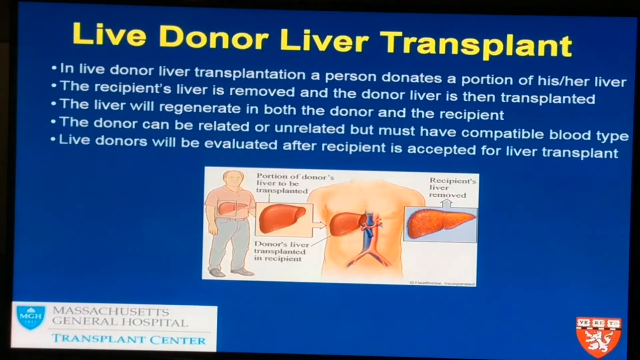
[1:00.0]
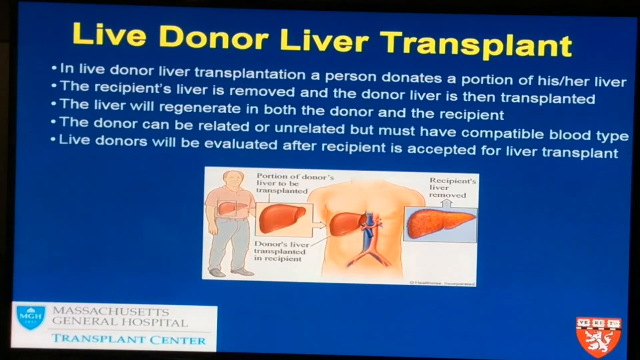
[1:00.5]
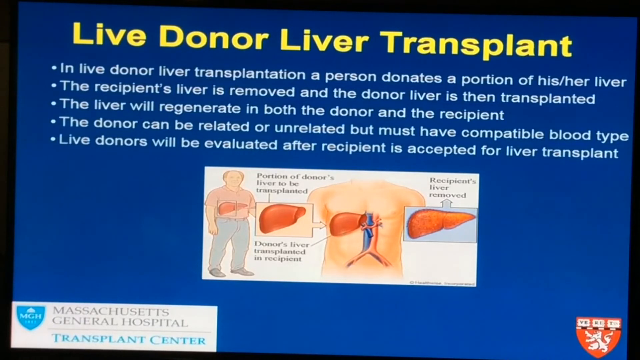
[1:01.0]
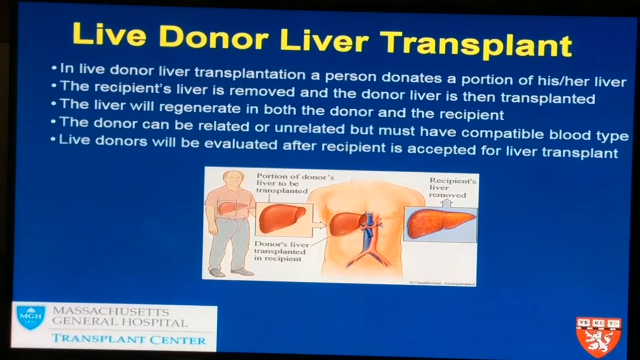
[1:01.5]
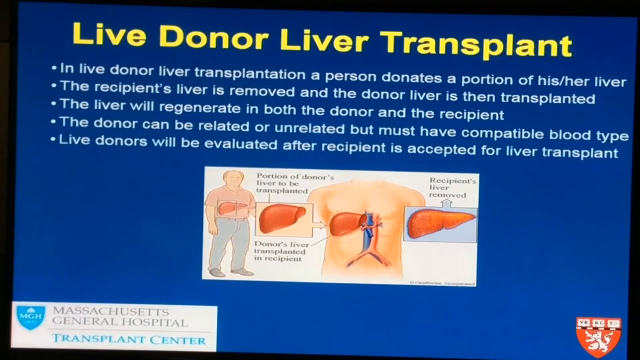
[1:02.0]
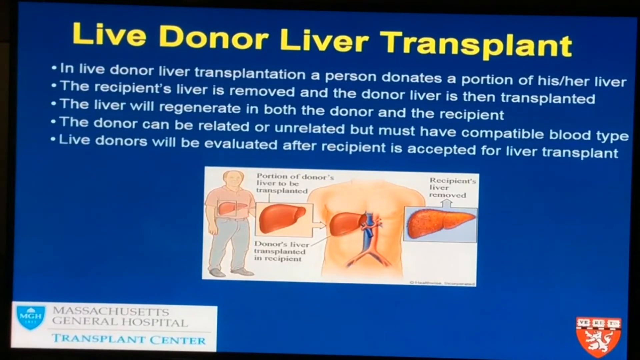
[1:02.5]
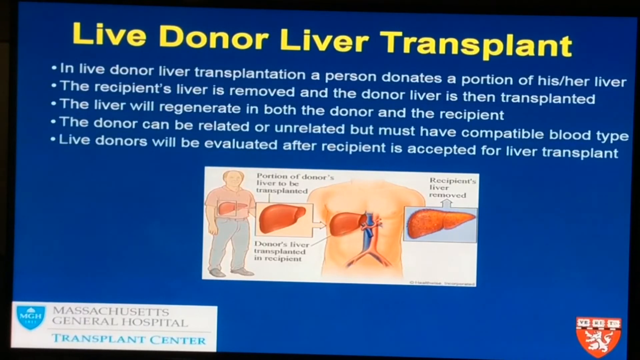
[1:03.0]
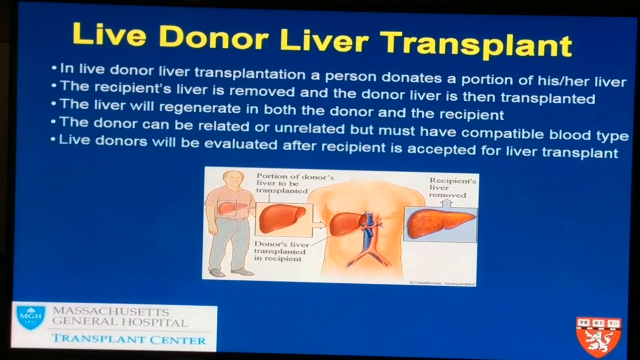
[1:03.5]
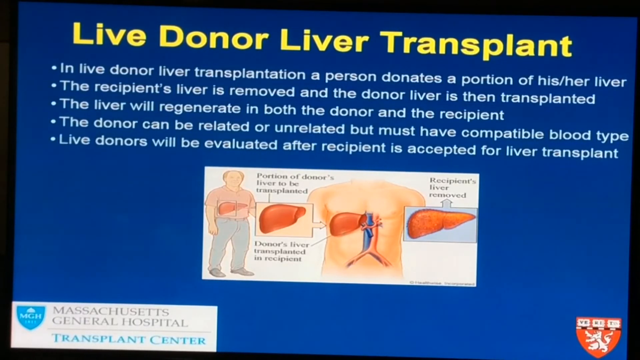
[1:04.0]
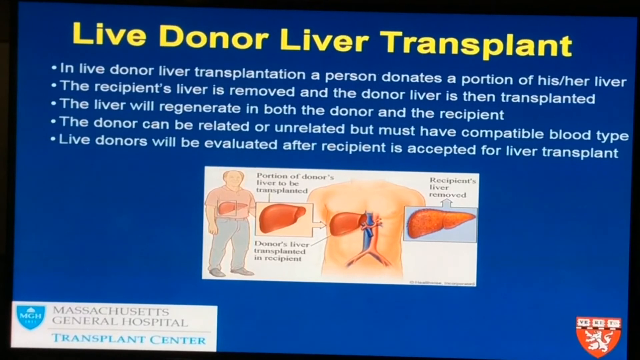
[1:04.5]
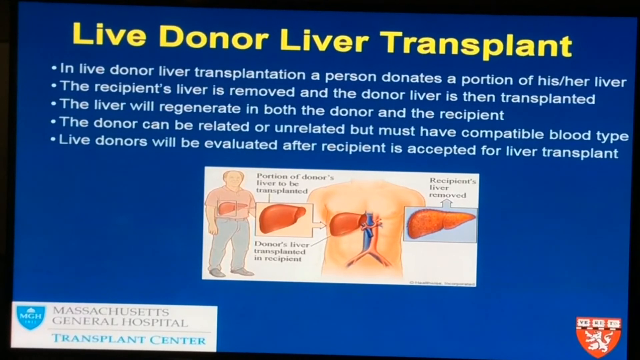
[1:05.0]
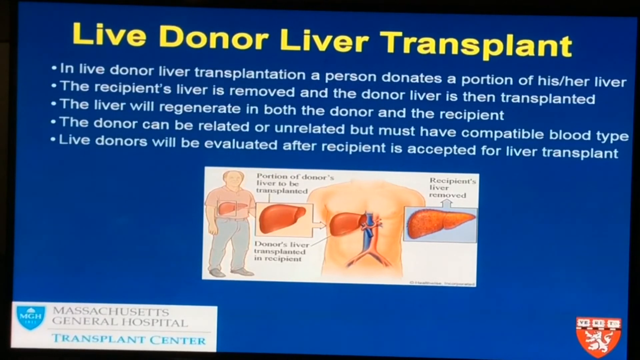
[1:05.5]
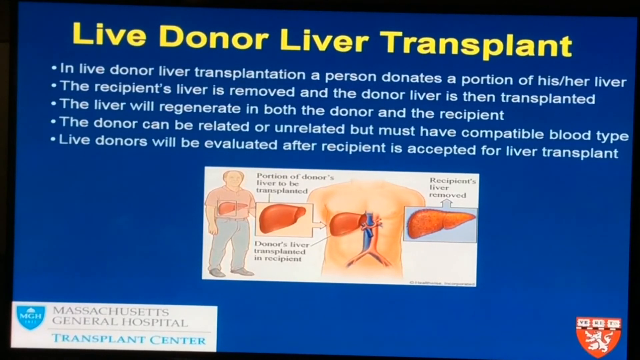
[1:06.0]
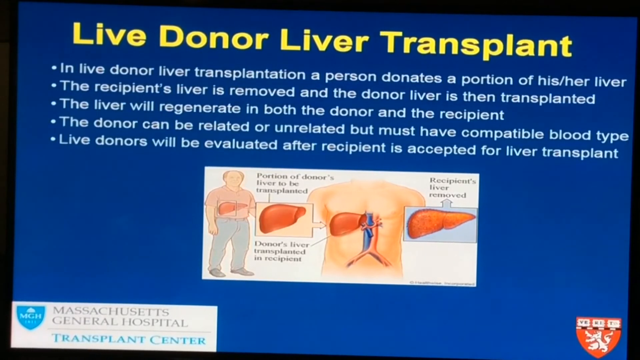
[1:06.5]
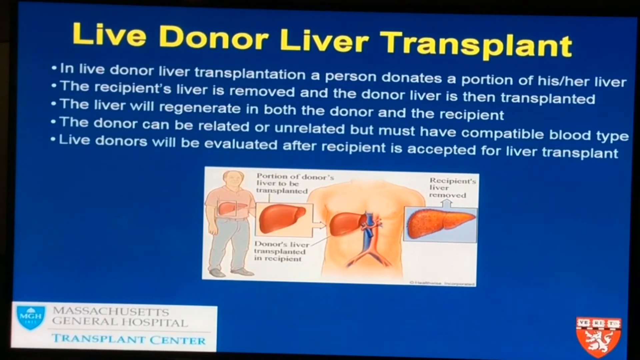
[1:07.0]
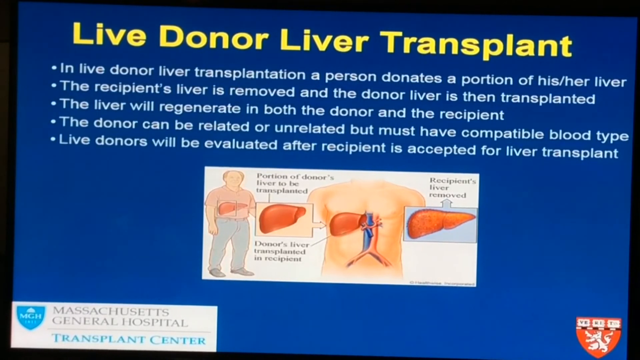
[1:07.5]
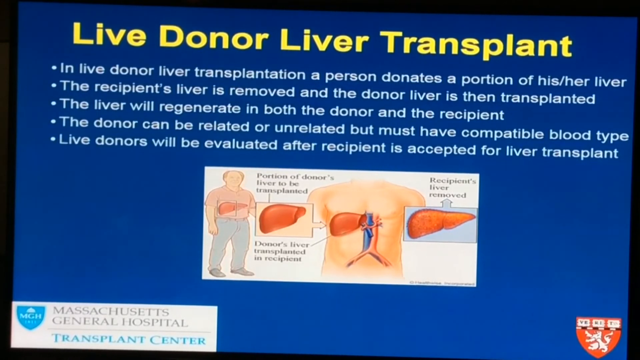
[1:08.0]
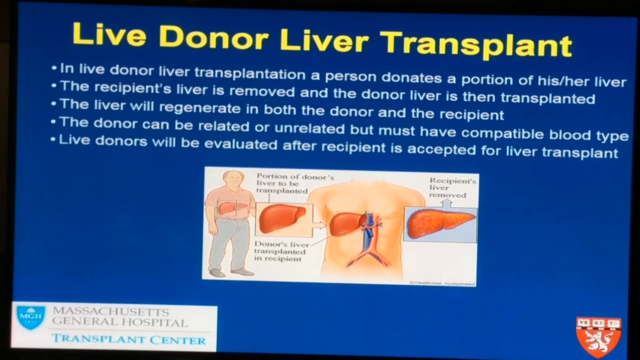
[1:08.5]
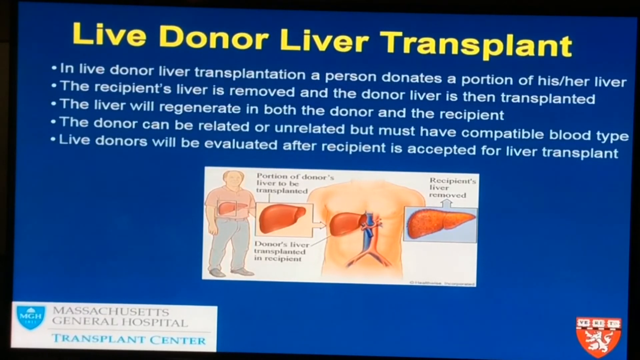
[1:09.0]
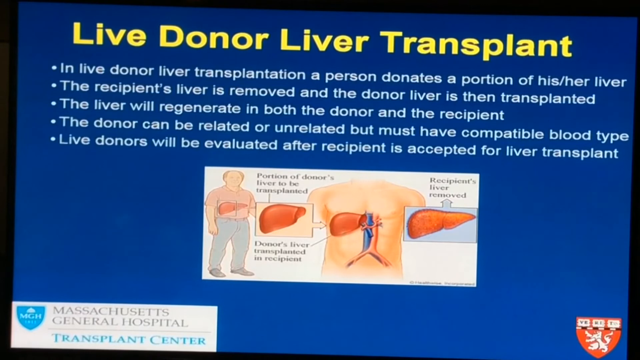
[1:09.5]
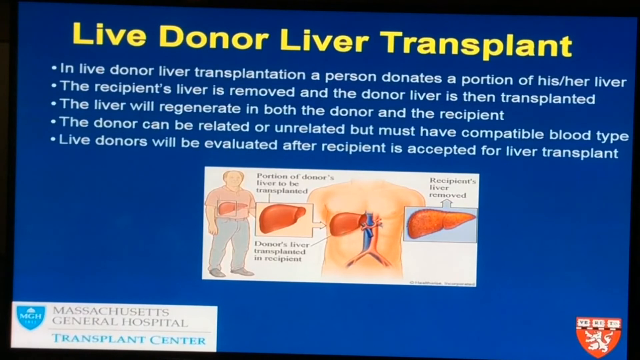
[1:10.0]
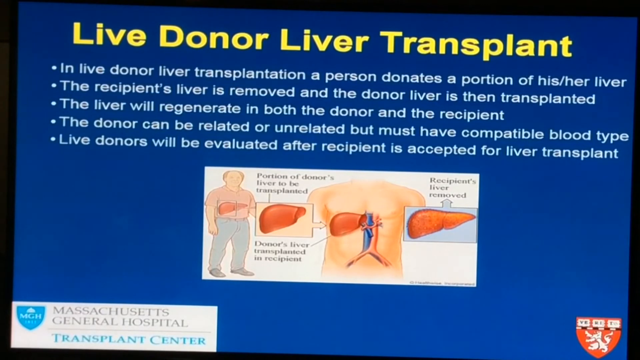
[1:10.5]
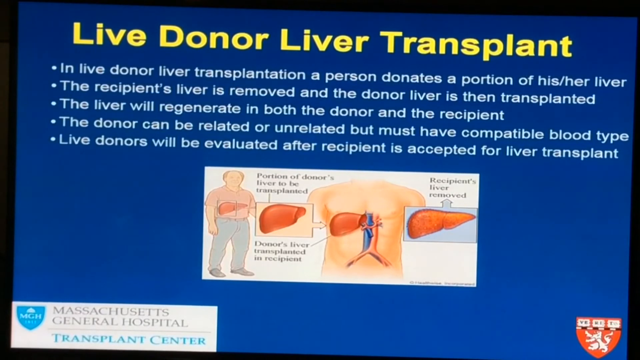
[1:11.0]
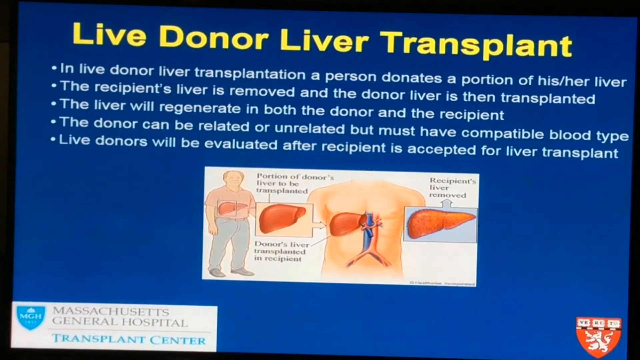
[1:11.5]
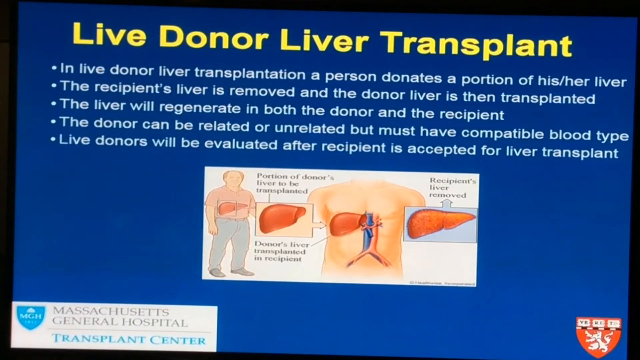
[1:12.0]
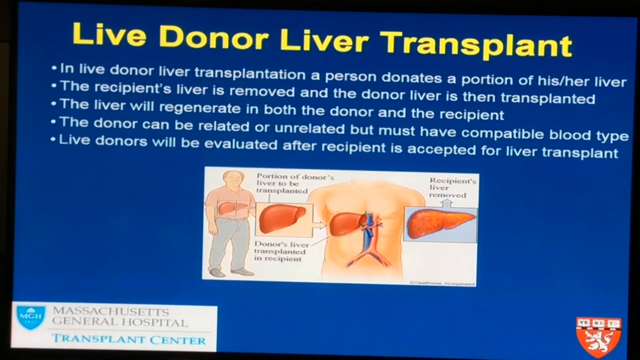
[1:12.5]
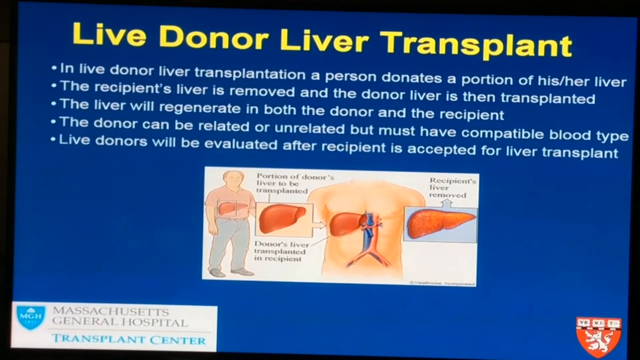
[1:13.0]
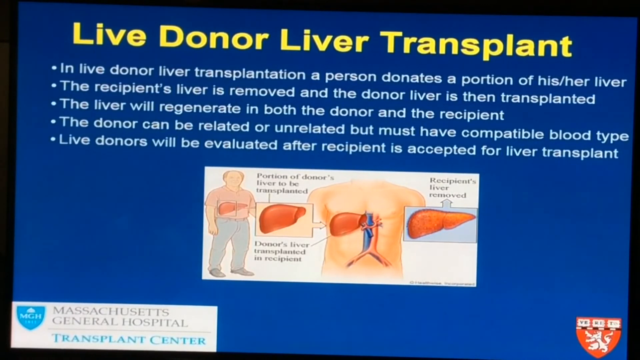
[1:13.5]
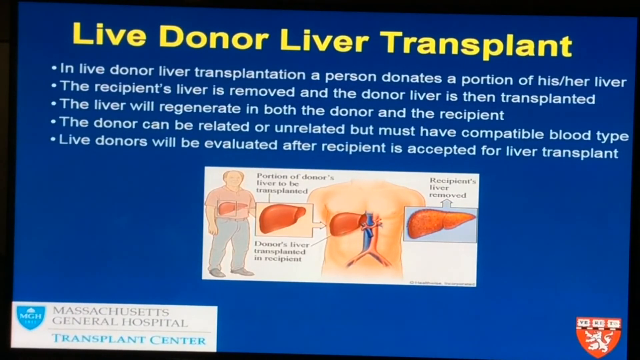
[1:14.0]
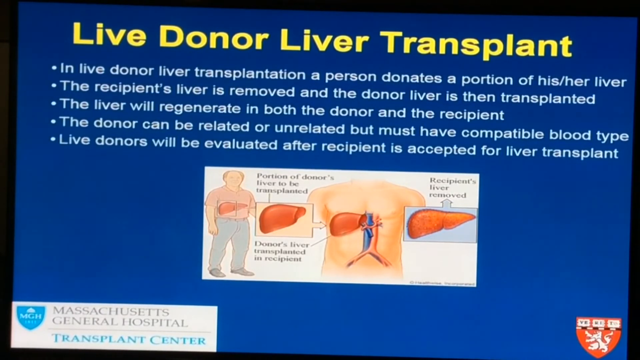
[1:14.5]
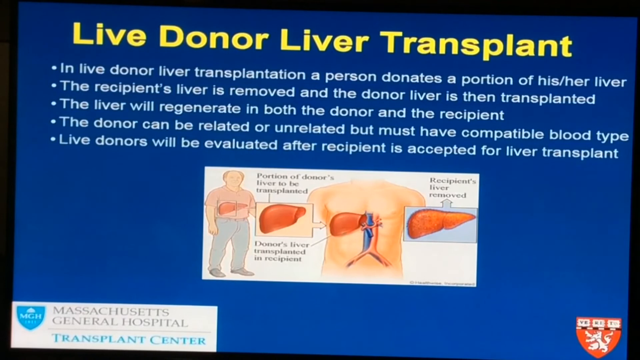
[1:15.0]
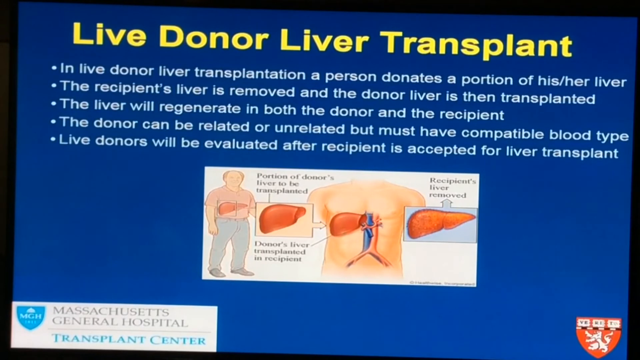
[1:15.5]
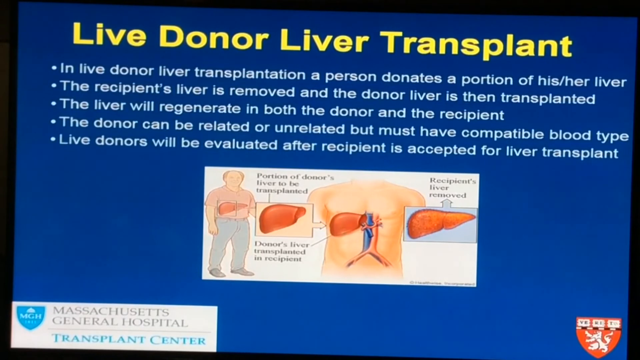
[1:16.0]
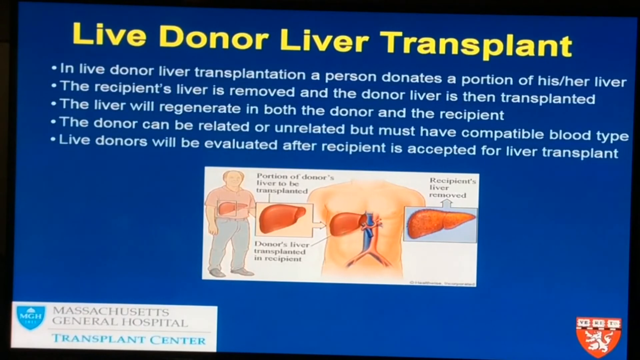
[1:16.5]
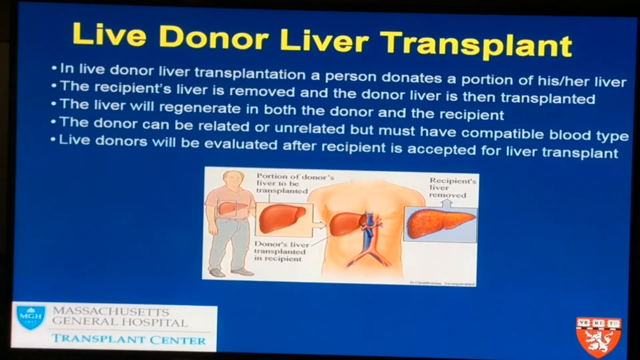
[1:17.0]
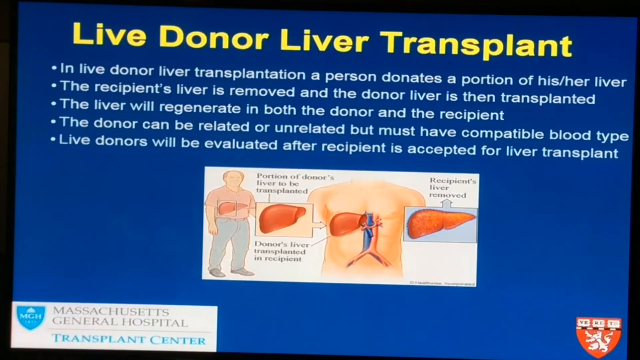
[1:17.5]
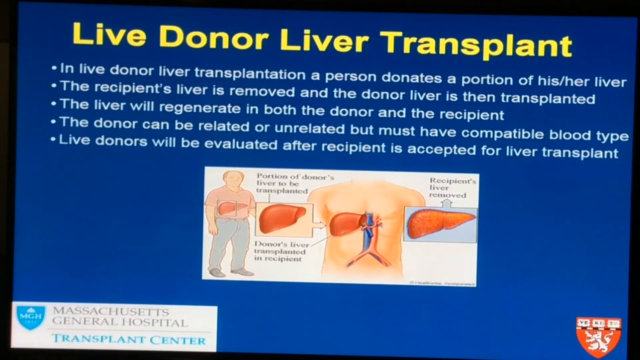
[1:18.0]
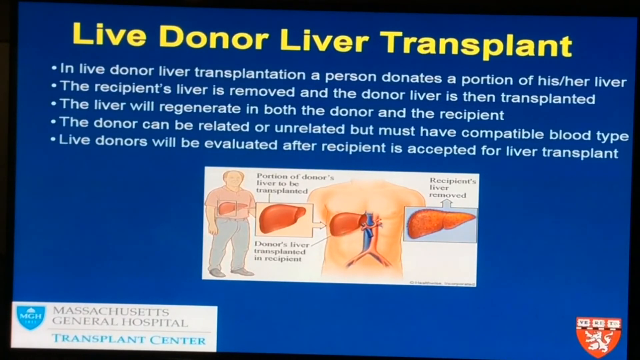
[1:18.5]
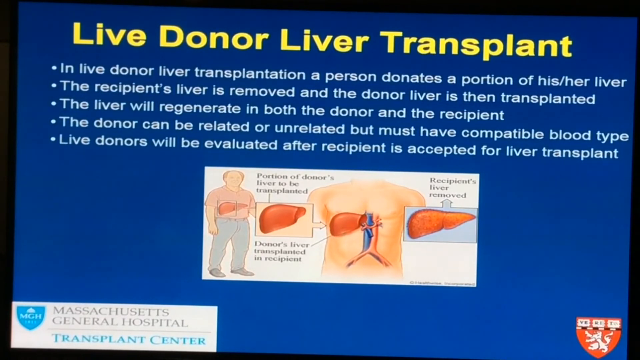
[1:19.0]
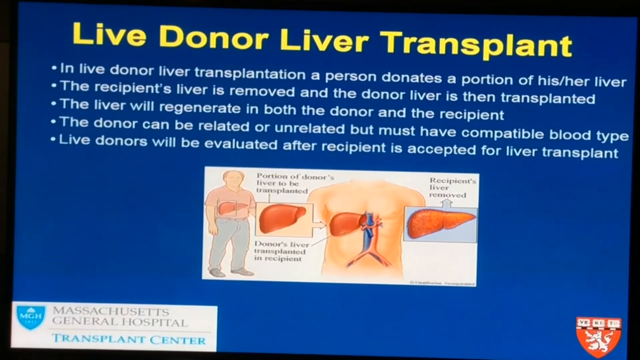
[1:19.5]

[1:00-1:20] A blue screen has yellow words at the top reading "live donor liver transplant". Below, five white dots run down, each with a sentence to its right: "in live donor liver transplantation, a person donates a portion of his or her liver"; "the recipient's liver is removed and the donor liver is then transplanted"; "the liver will regenerate in both the donor and the recipient"; "the donor can be related or unrelated but must have compatible blood type"; and "live liver donors will be evaluated after recipient is accepted for liver transplant". Below the sentences is a white rectangle whose top and bottom are longer than its left and right sides. On its left side a man is standing, wearing a pink shirt and blue jeans, sort of facing the camera, with his arms down at his sides; his liver is visible through his shirt. To his right is a smaller peach square with a liver in it. To the right of that is a person's chest with a liver underneath the right pectoral, a blue blood vessel connected to it, and a red blood vessel to the right of that. Further right is a blue rectangle with a liver in it. There are words written above and below the liver on the left and above the blue liver on the right.